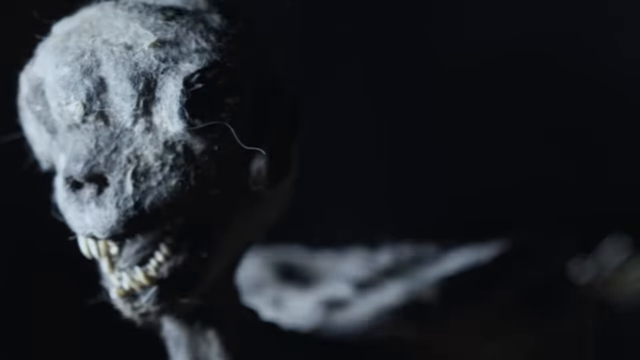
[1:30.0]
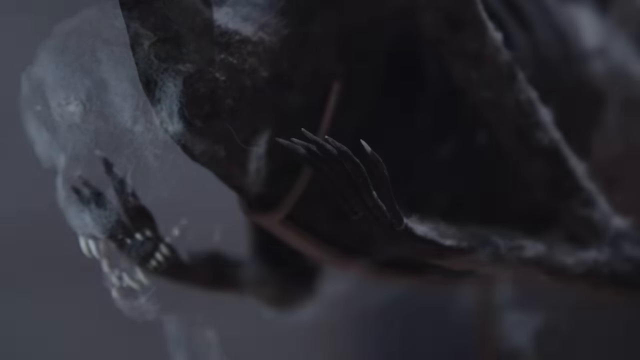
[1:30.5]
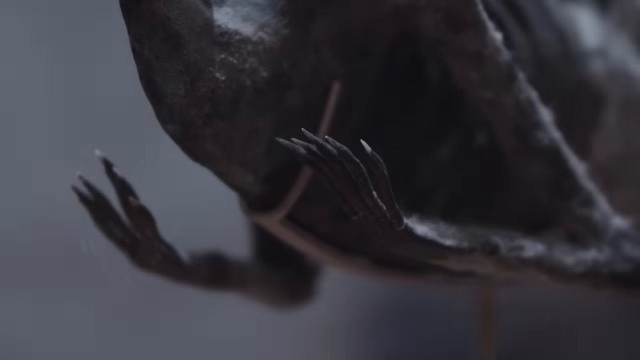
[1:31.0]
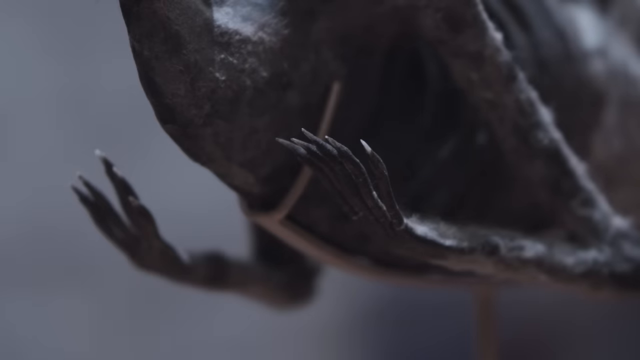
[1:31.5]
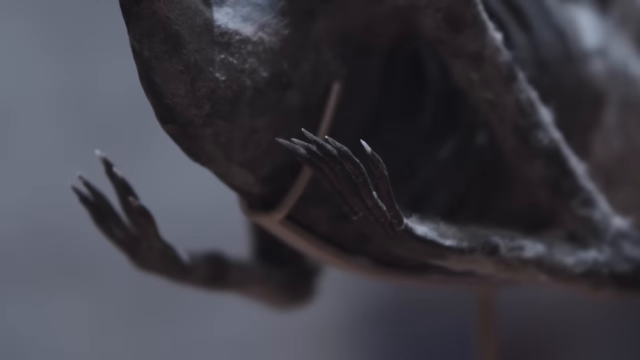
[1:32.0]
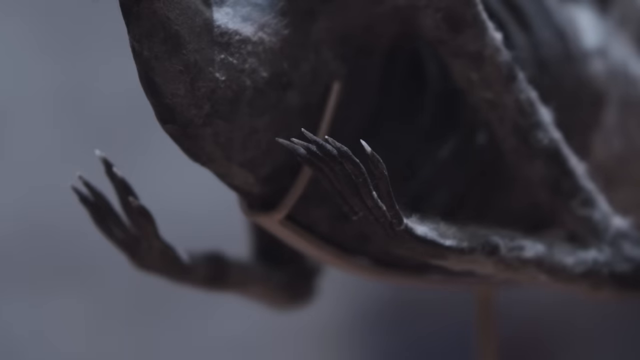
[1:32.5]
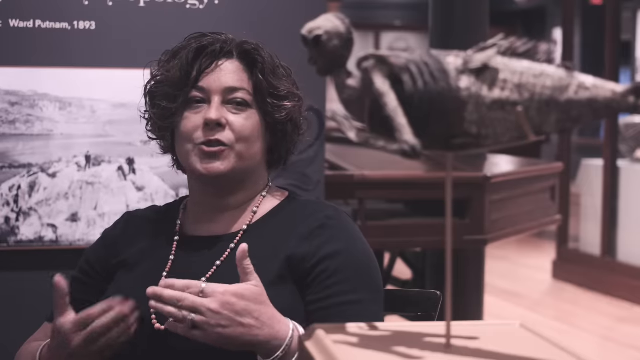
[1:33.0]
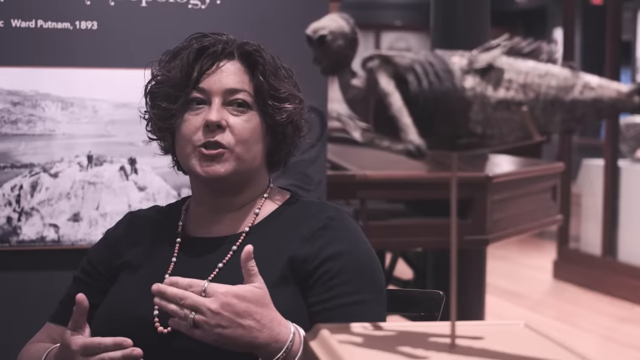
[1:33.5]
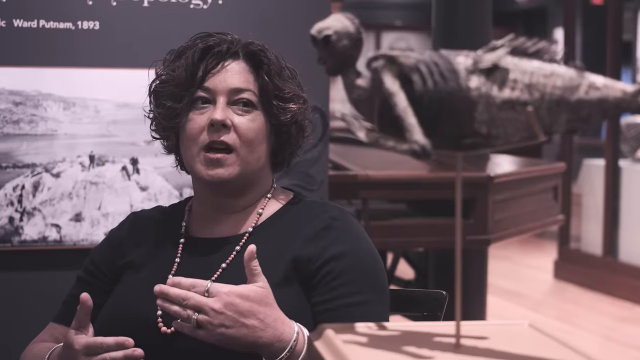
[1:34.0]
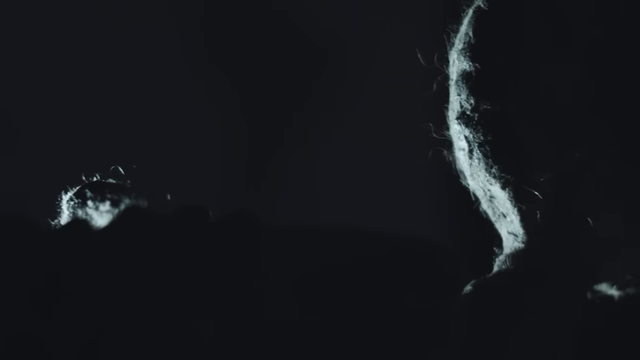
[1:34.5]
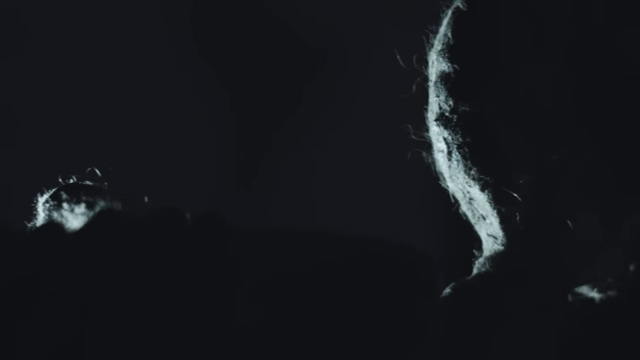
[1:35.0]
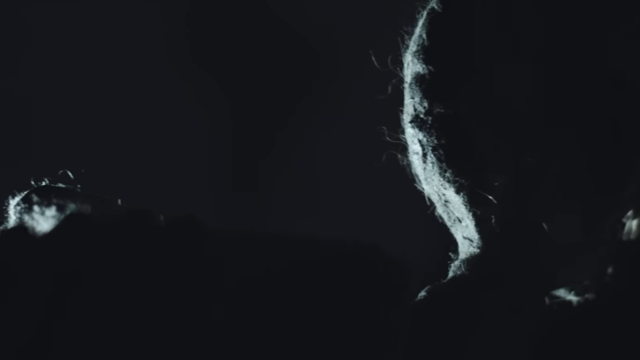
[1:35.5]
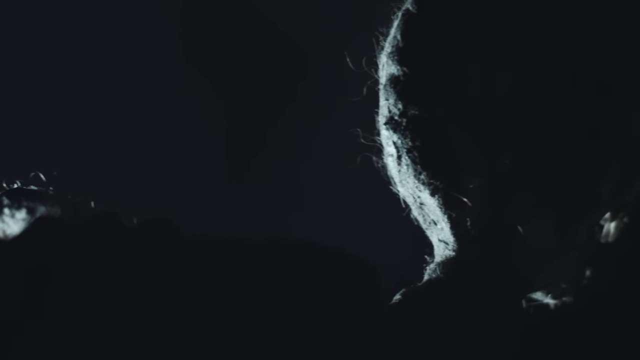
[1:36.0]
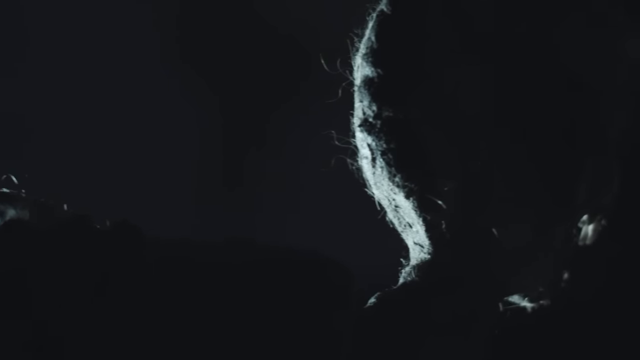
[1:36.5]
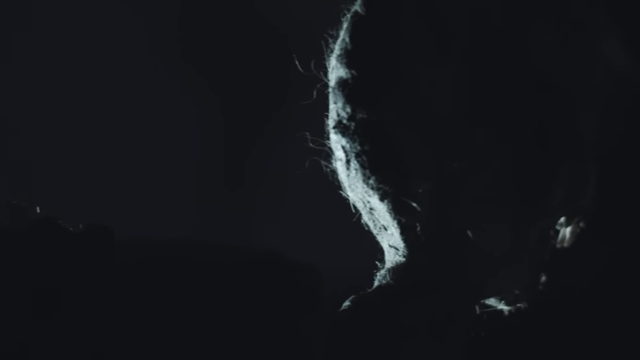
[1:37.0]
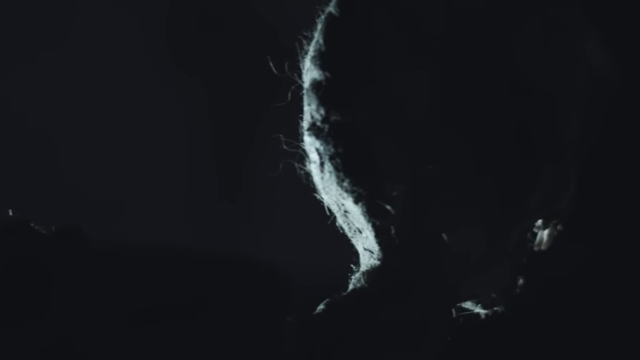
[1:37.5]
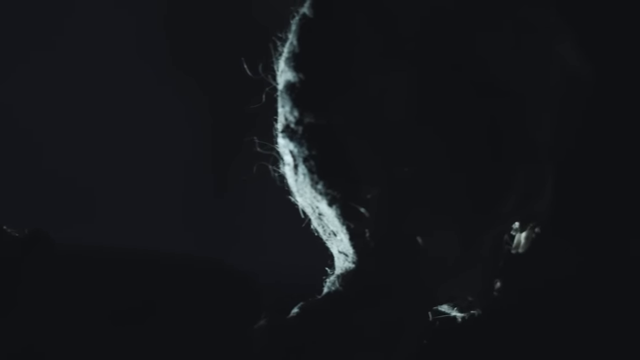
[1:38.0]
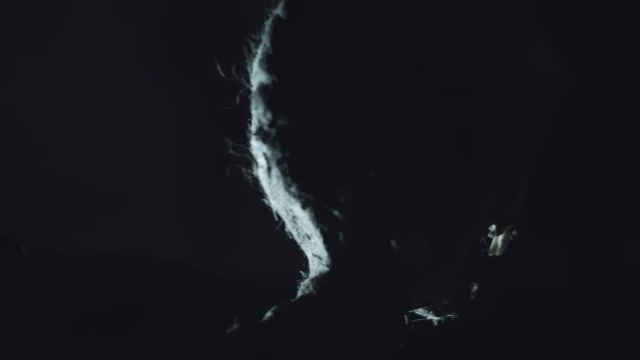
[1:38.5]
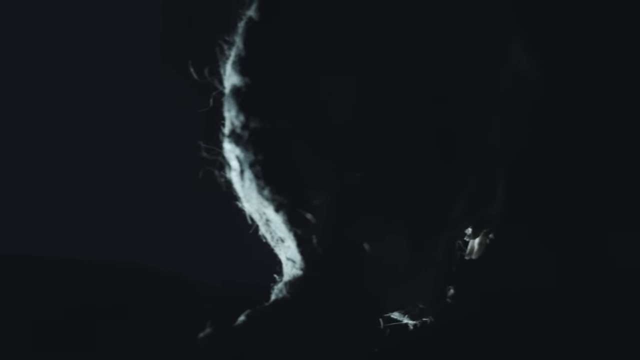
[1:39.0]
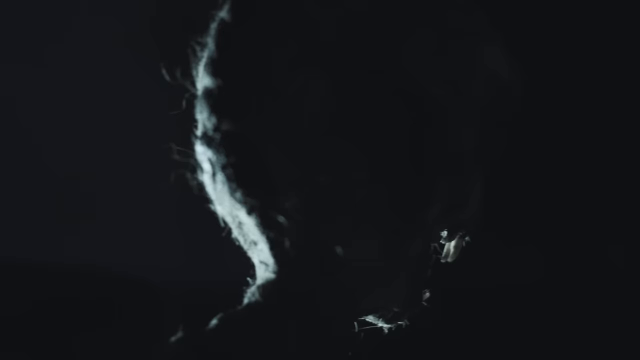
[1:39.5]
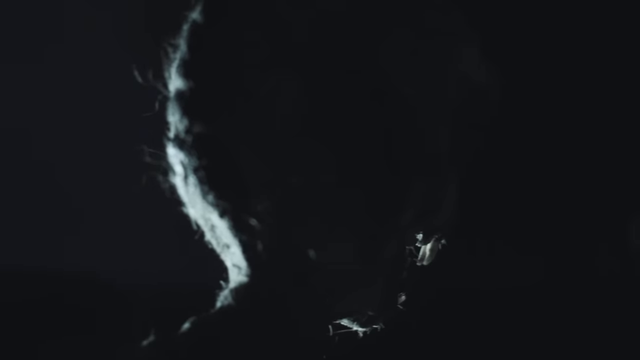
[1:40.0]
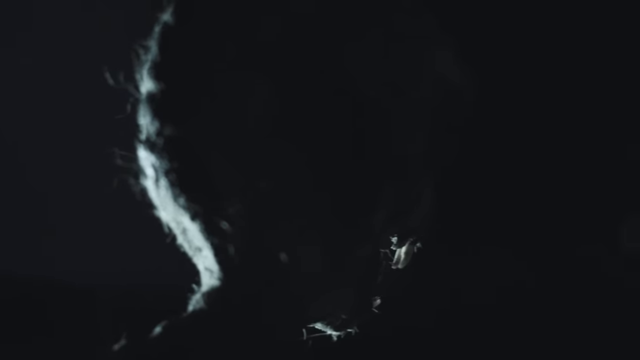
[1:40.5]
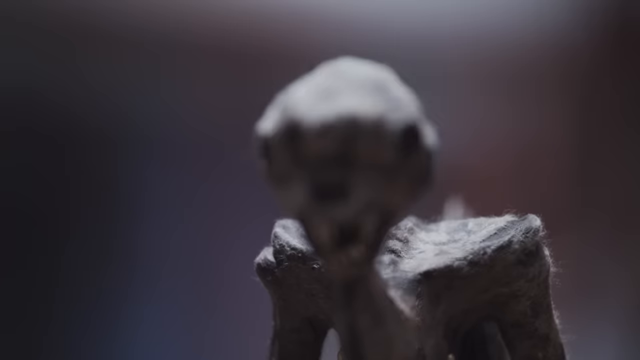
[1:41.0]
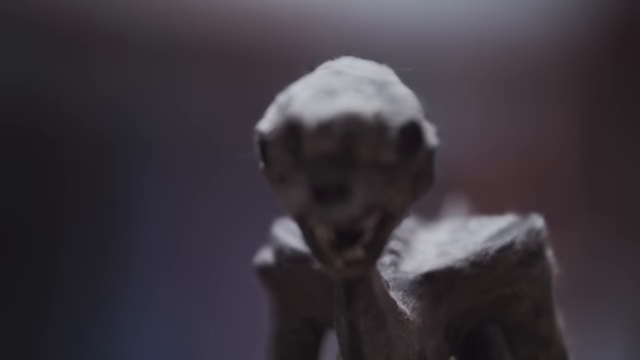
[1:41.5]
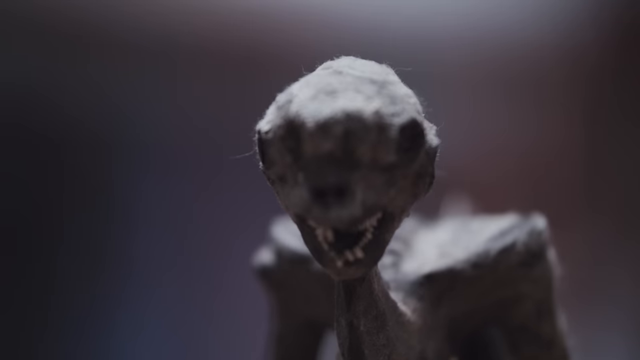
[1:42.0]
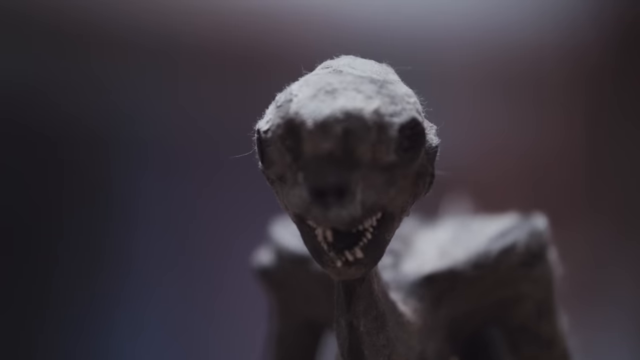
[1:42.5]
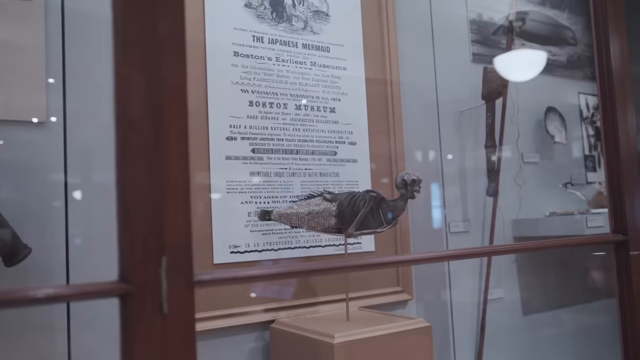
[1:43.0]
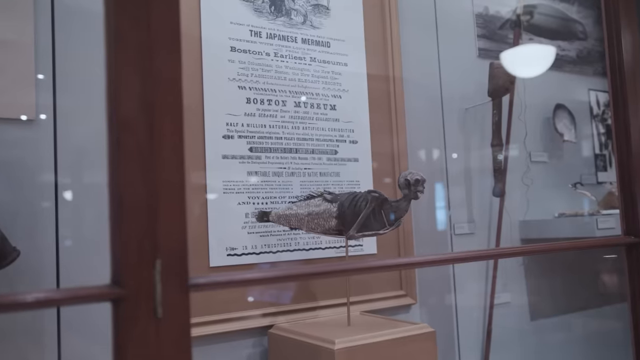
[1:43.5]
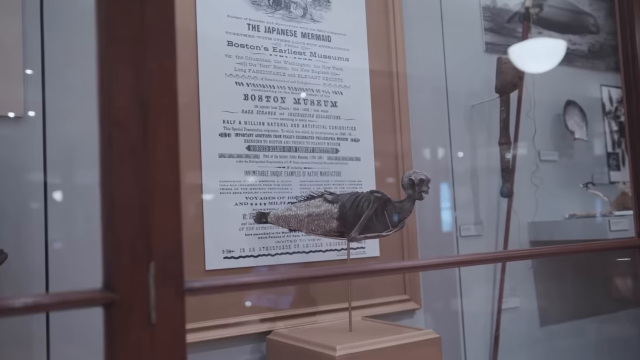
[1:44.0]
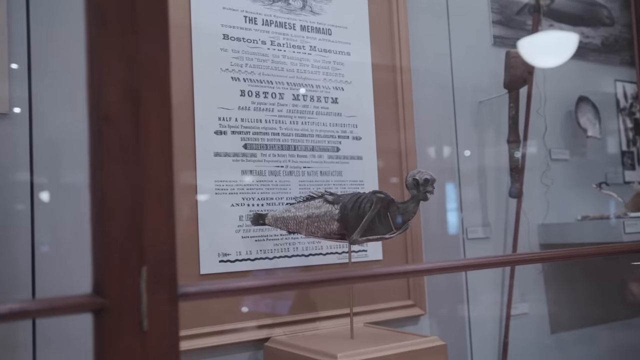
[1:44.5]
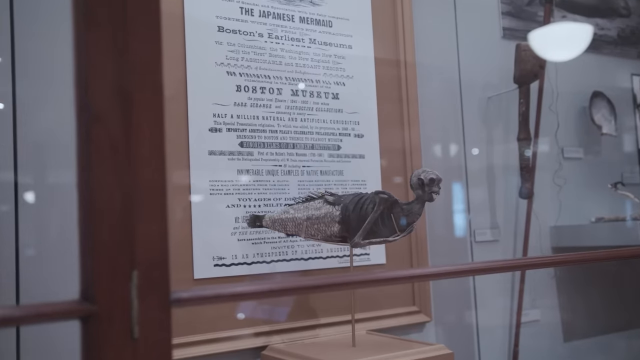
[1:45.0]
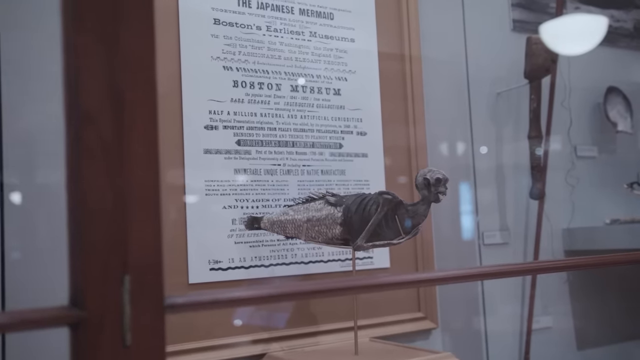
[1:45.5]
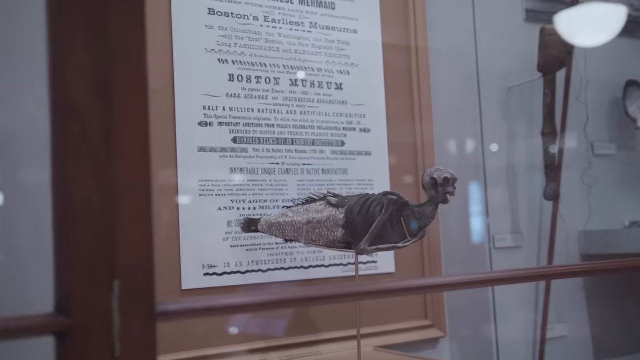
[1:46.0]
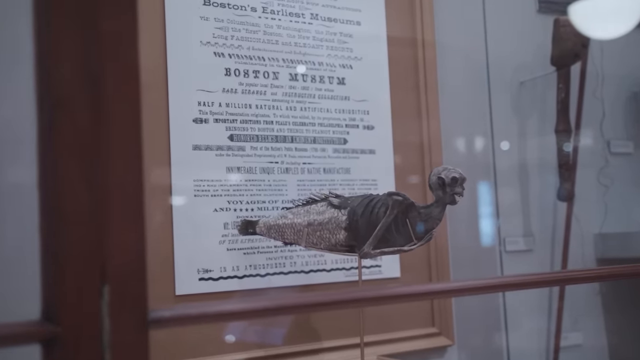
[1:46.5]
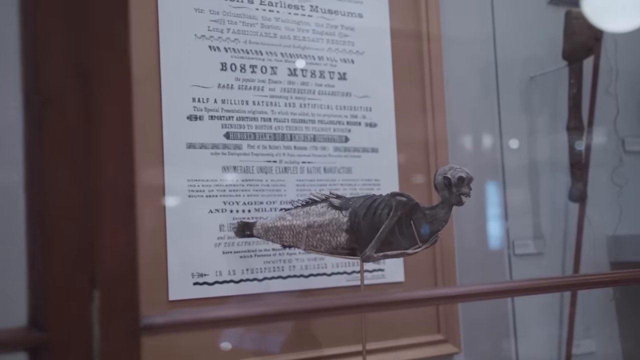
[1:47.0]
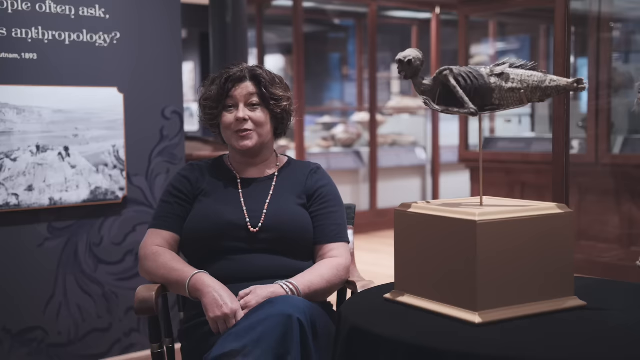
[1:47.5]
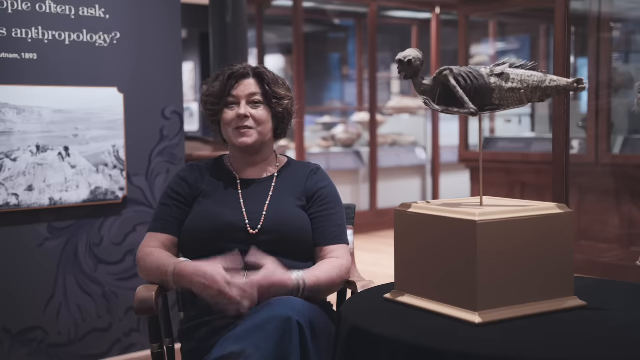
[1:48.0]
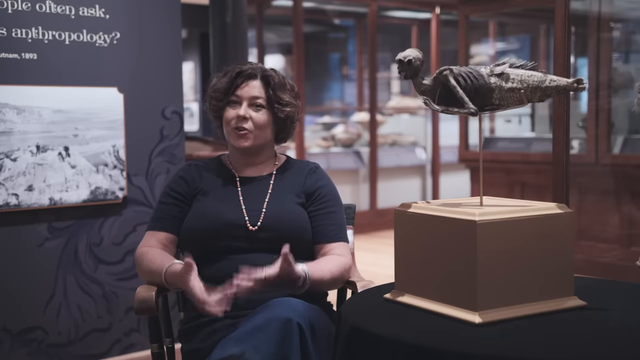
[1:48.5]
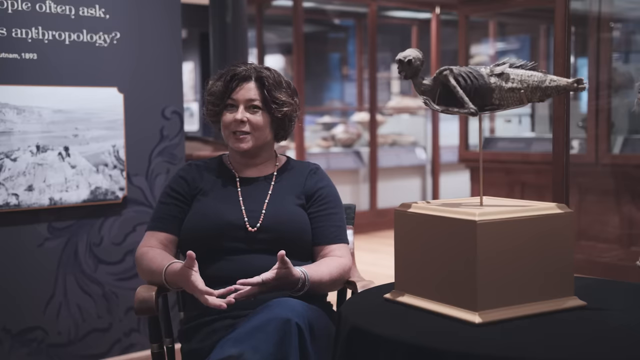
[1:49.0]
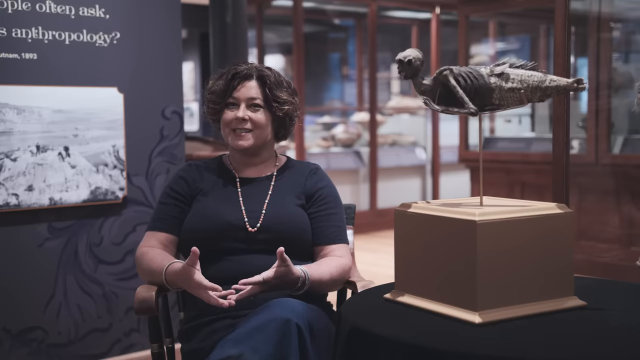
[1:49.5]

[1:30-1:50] The camera is zoomed in on the creature on the left side. It appears to have an arm, and its teeth look like piranha teeth: pointy with jagged edges. The white, jagged teeth are visible on the right side of its mouth as it faces the viewer; at the top on the left side some are missing, and the bottom teeth are visible while the top ones are hard to see. A close-up then shows its nails from underneath, as if the camera is looking up. The woman is shown again, and then the creature is shown in its case. Text reads "Japanese mermaid," and on the wall it says "Boston's earliest museums" and "Boston Museum," with other words not visible.